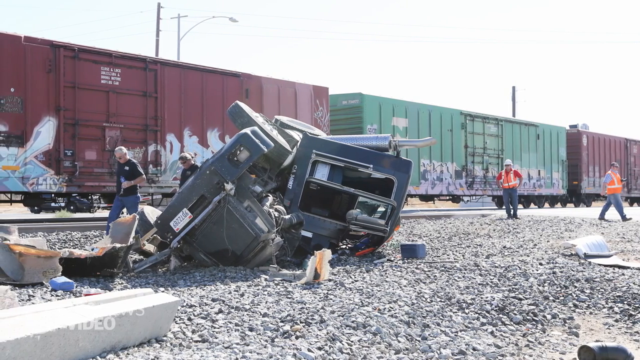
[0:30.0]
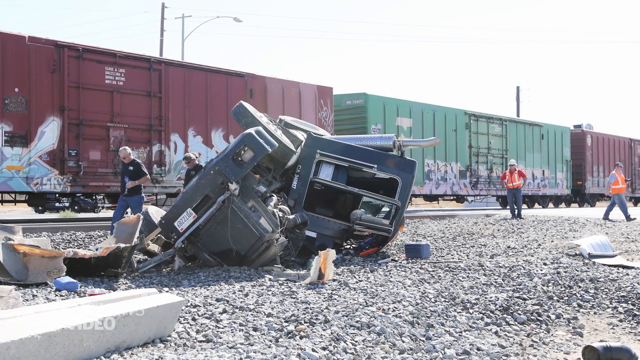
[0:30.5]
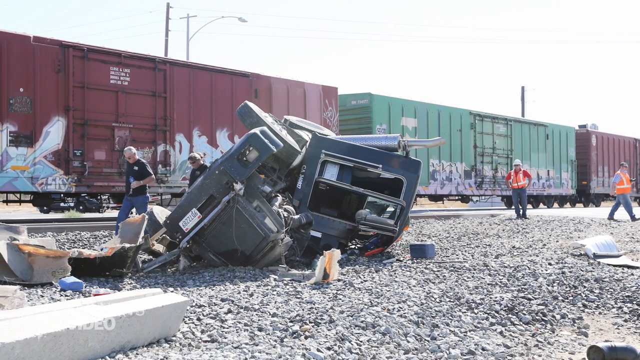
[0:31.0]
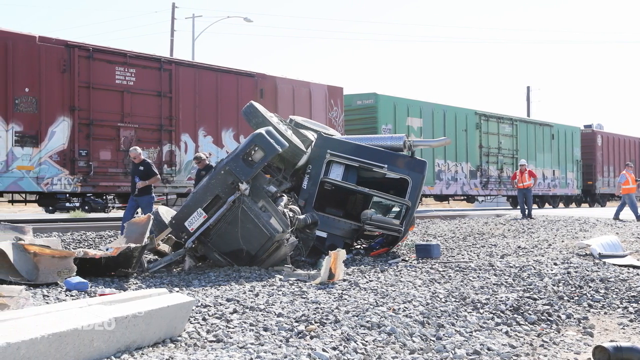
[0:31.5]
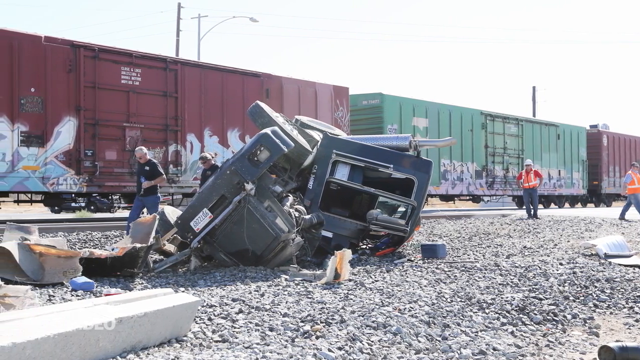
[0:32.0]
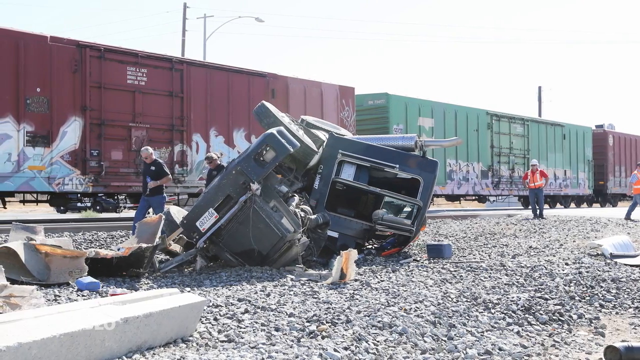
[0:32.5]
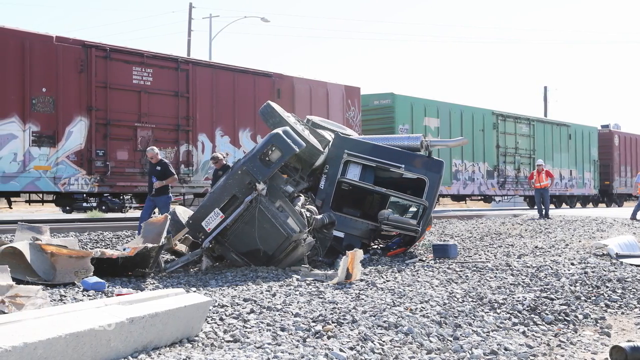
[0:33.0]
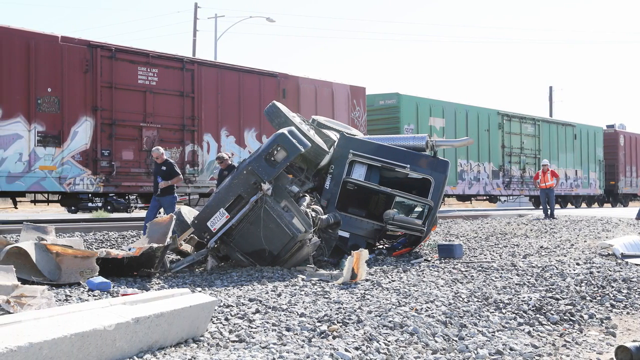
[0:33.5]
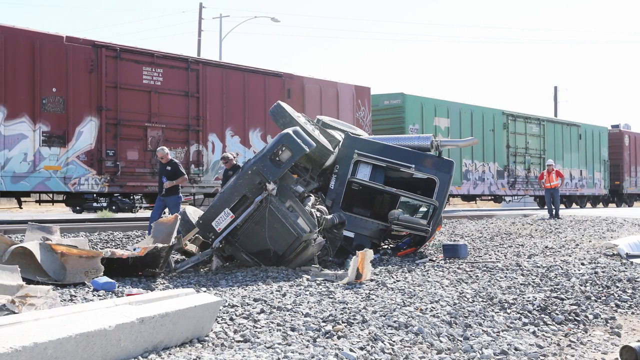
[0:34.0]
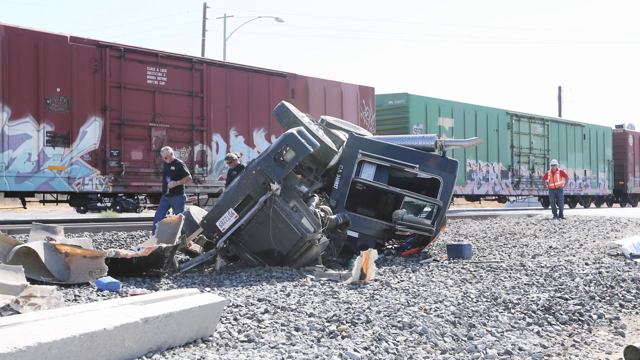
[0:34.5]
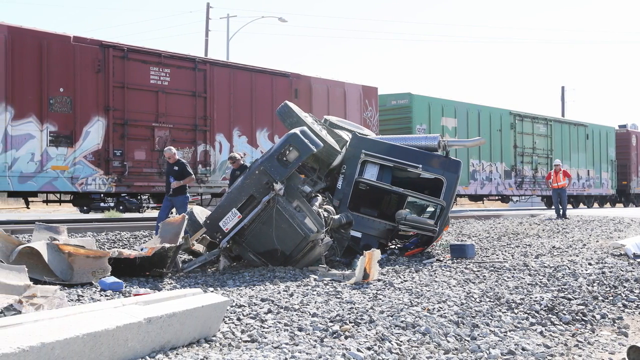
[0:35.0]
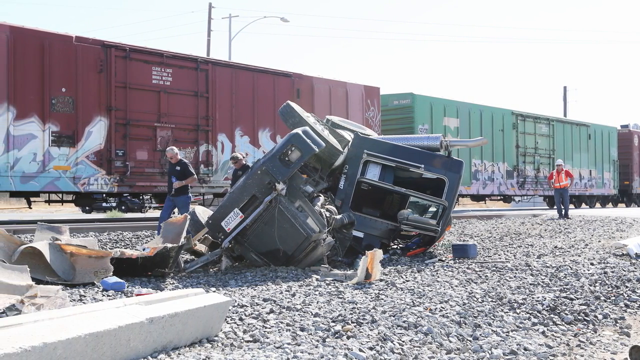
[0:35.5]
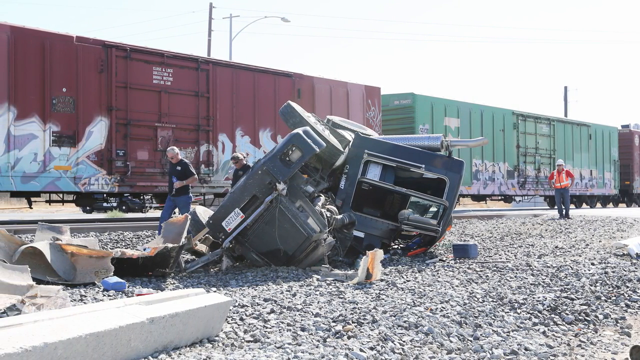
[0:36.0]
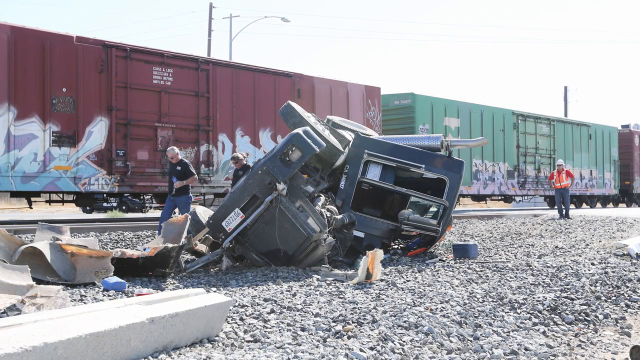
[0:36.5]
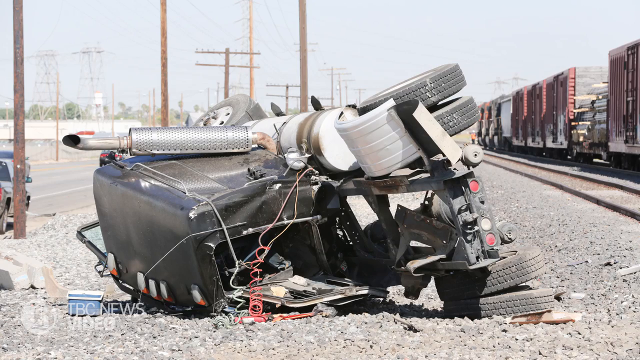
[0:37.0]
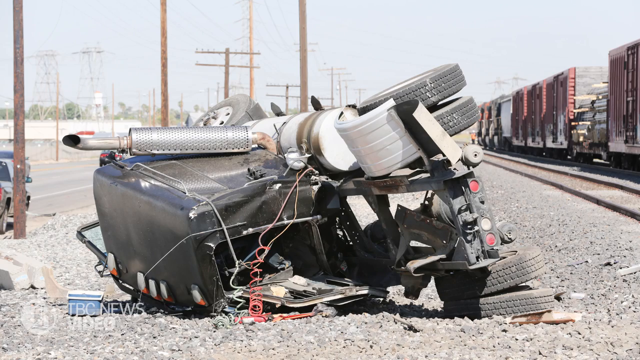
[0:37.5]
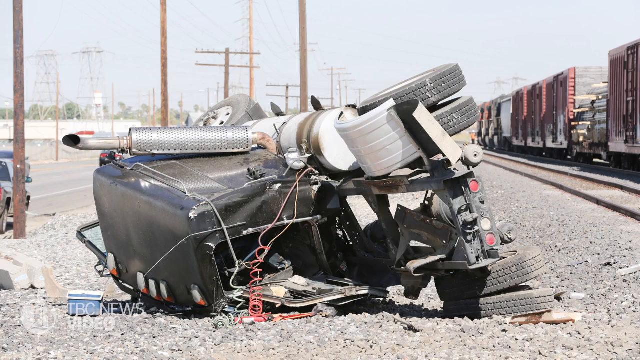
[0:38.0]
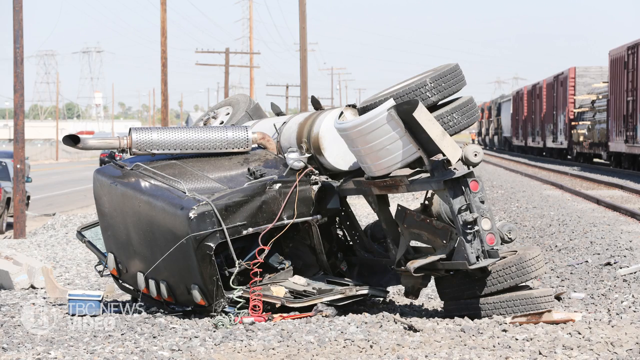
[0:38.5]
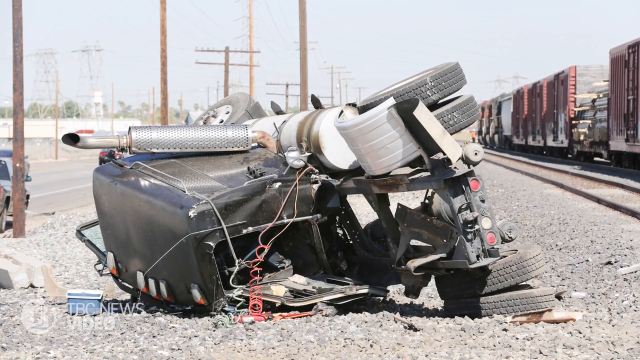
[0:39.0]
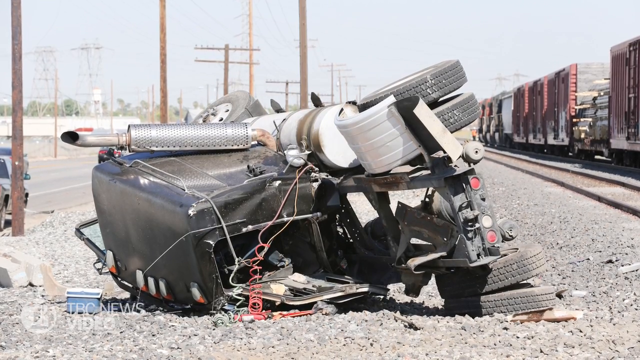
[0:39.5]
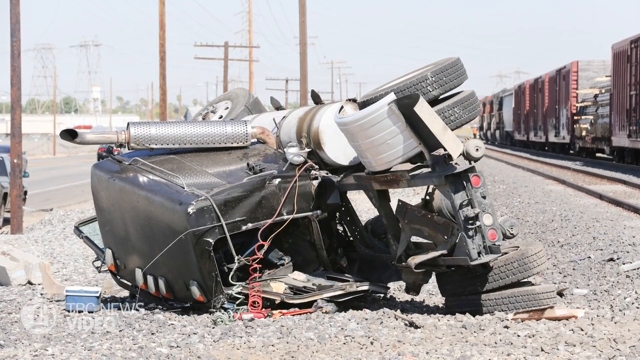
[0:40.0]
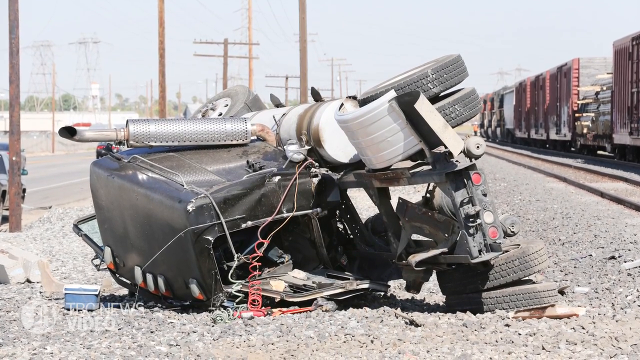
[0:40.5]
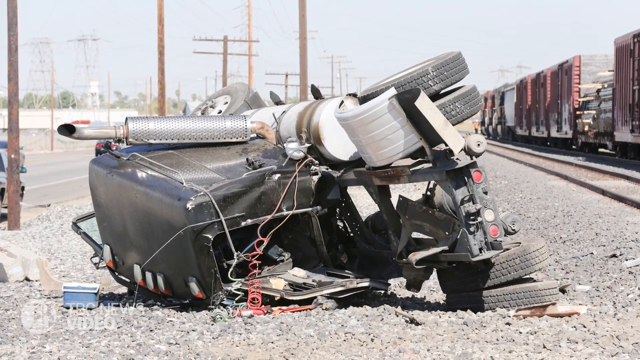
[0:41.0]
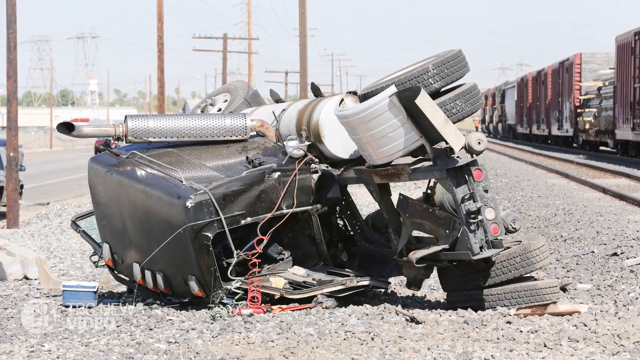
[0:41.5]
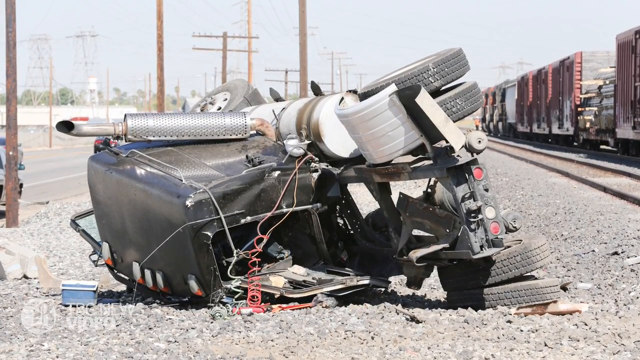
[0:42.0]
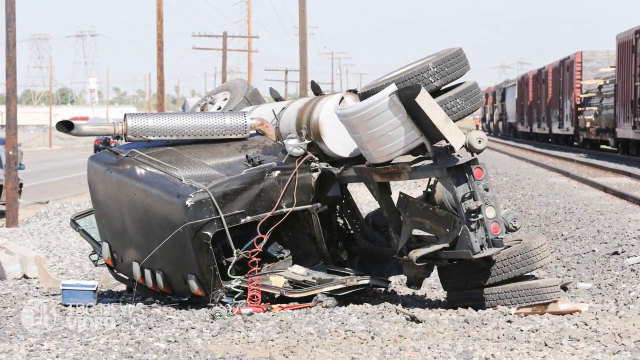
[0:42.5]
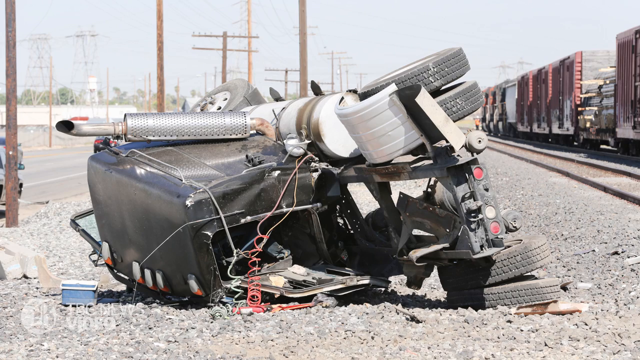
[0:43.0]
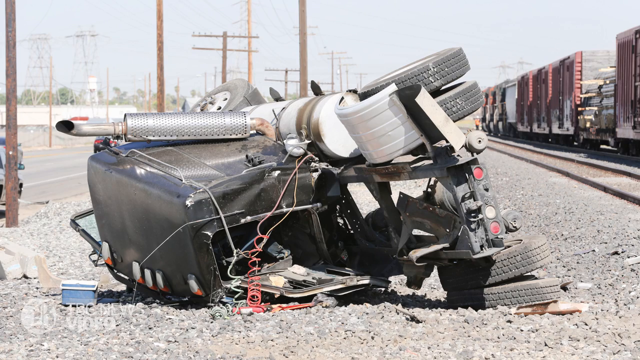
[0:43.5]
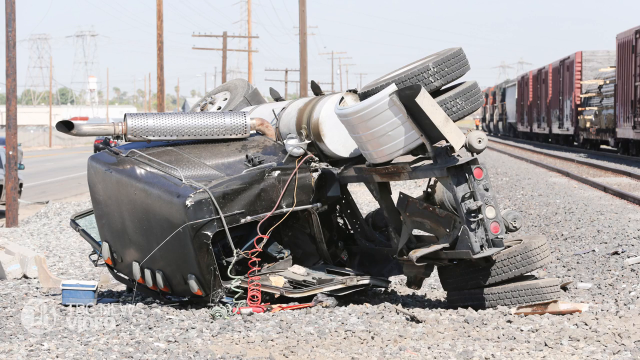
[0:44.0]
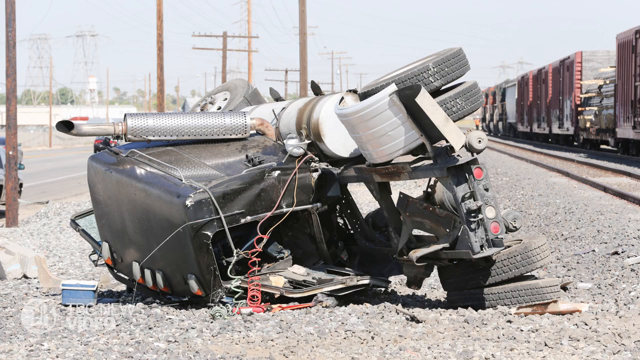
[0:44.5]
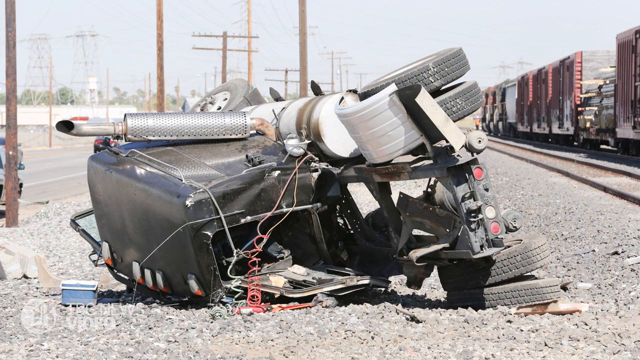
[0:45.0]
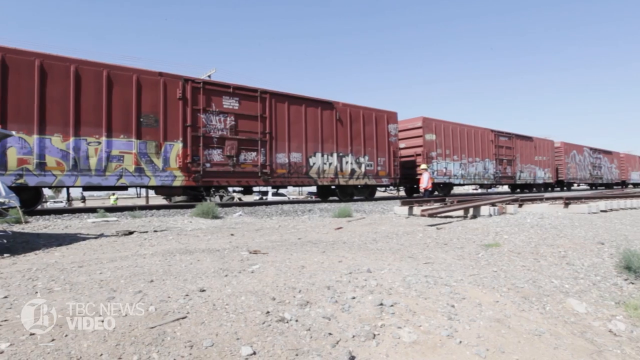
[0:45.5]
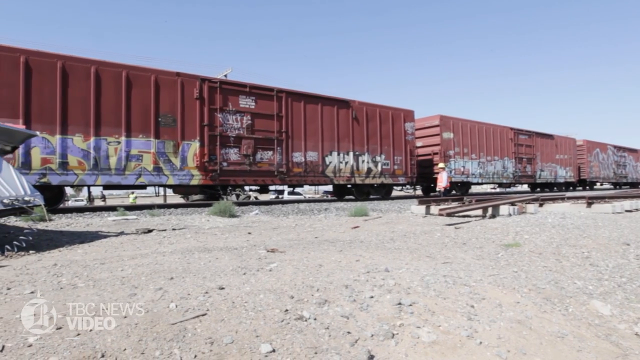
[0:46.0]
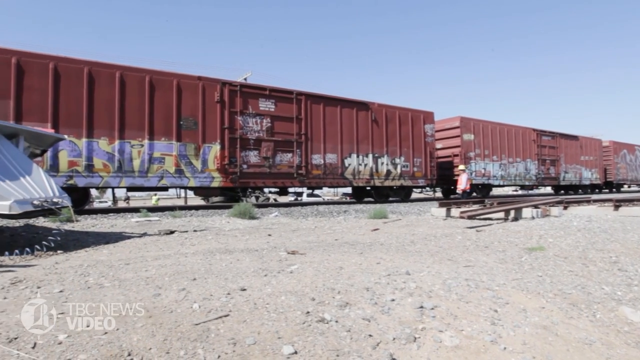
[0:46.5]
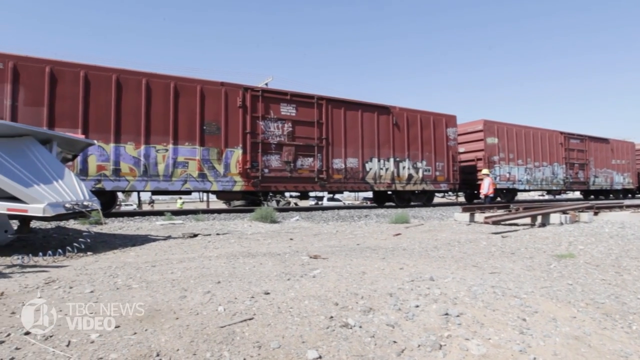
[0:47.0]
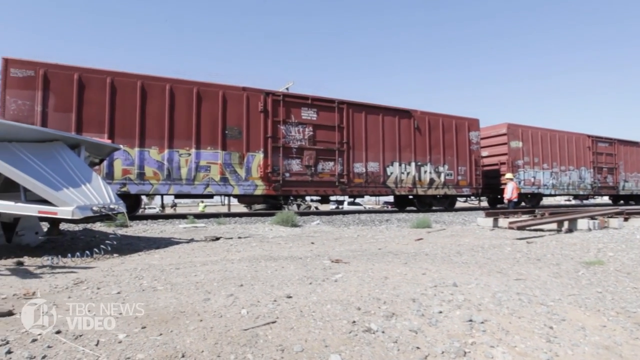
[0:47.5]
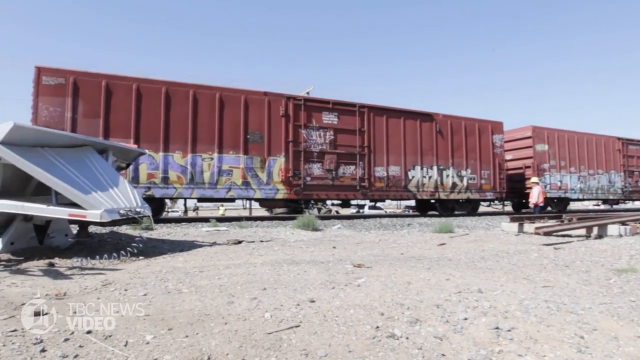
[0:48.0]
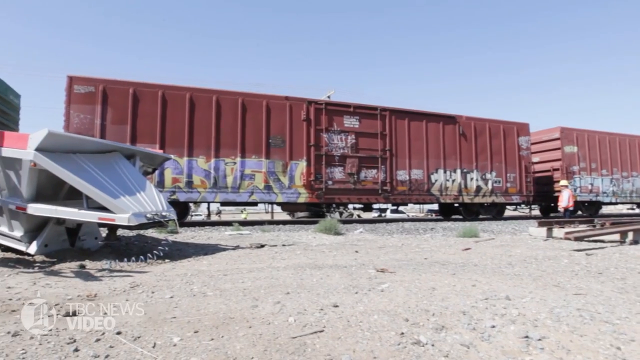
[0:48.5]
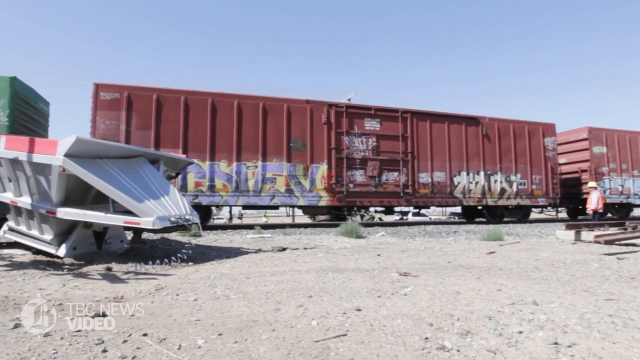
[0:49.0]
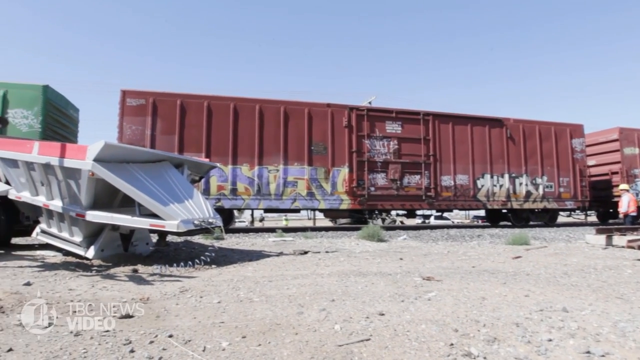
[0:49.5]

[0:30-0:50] People wearing black shirts pass by, and others wear reflective vests. The truck is then shown up close from another angle as it is moved away from the train. It is badly damaged: some of its wheels are still intact and it is mainly the body that is wrecked. Some of its parts have gone off in other directions, and parts are scattered on the floor all around the train rail. People are inspecting the mess. Cars are standing at the side of the road, apparently belonging to the people there to inspect. No one is seen coming from the truck, and no one is covered with a foil to indicate any fatalities.